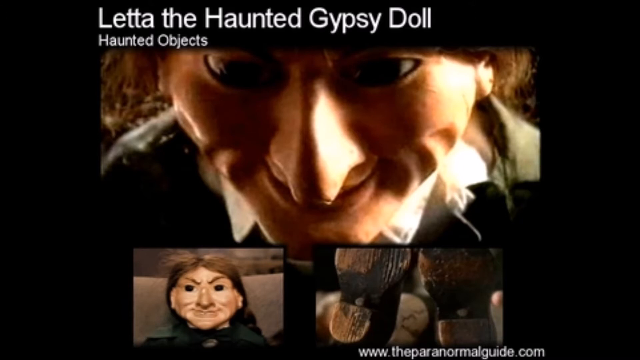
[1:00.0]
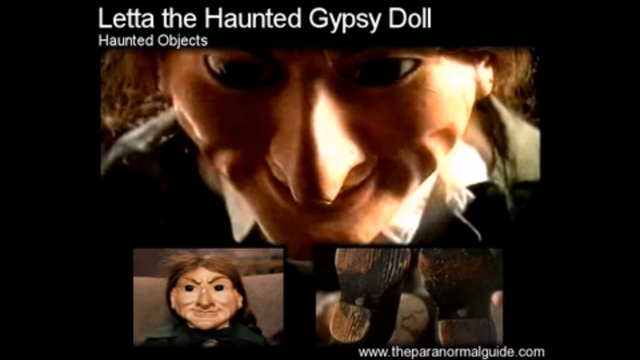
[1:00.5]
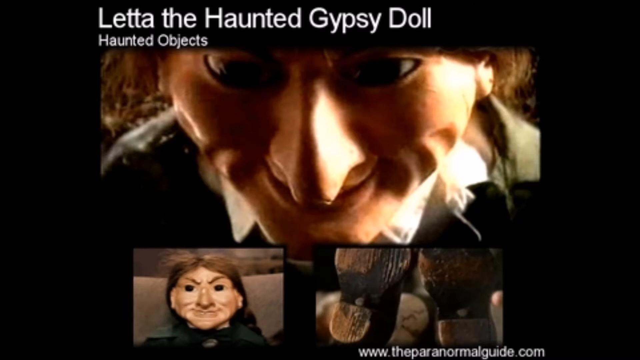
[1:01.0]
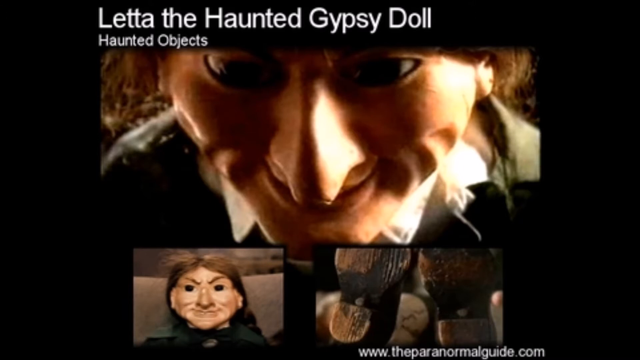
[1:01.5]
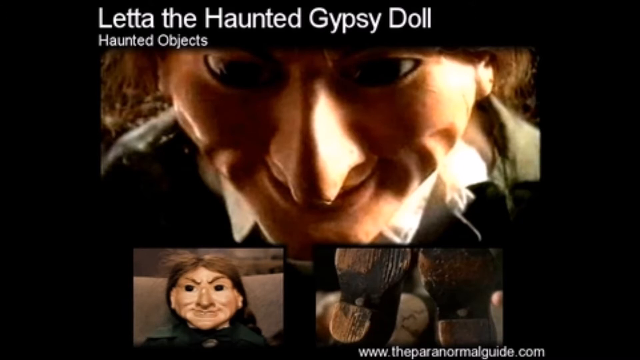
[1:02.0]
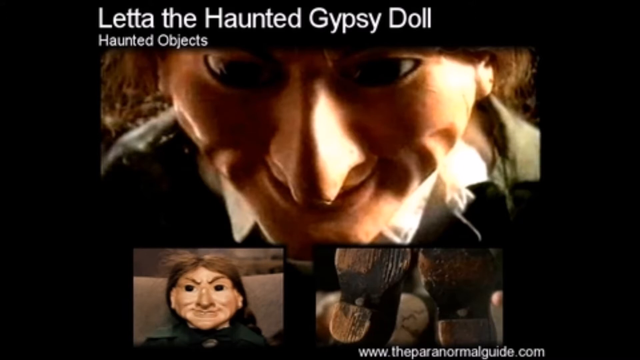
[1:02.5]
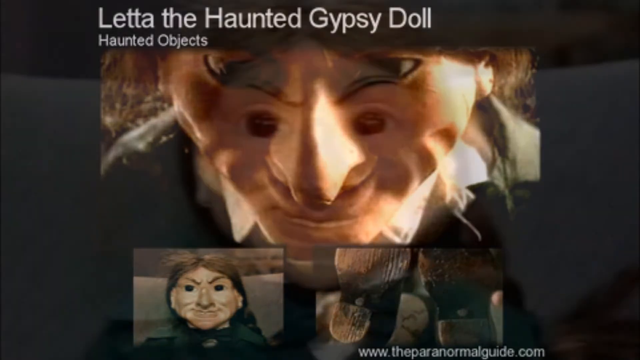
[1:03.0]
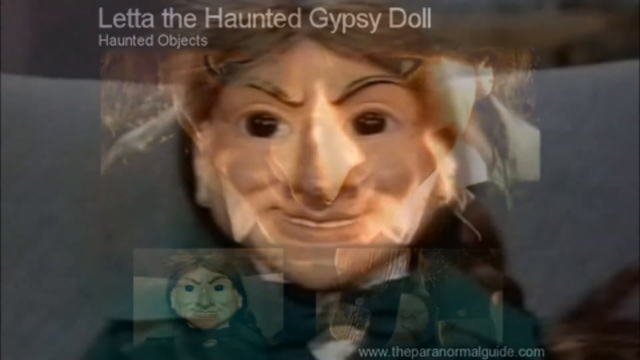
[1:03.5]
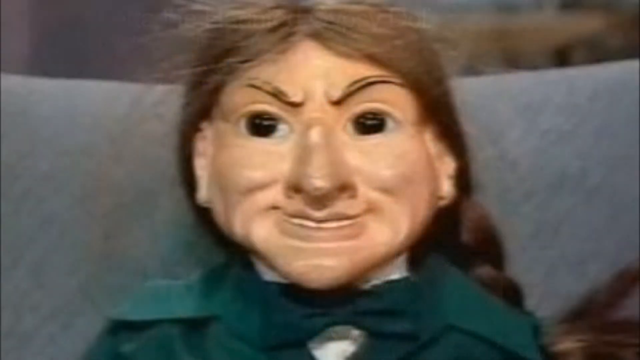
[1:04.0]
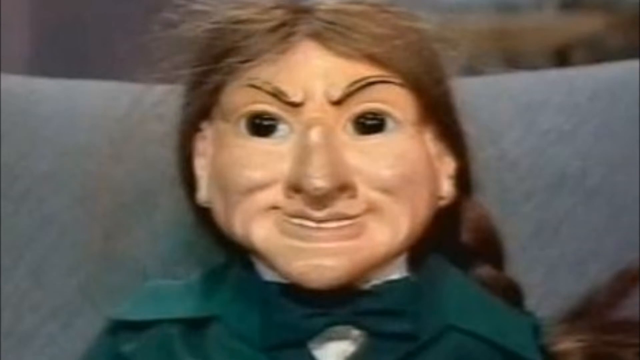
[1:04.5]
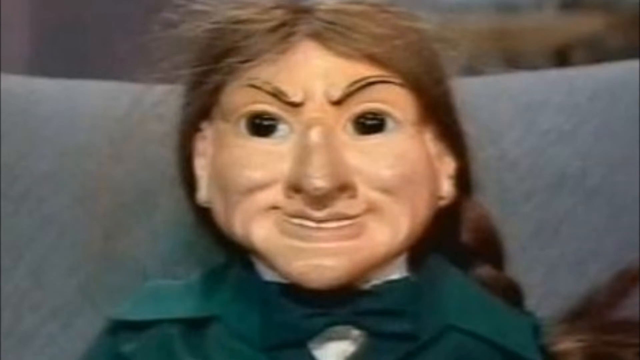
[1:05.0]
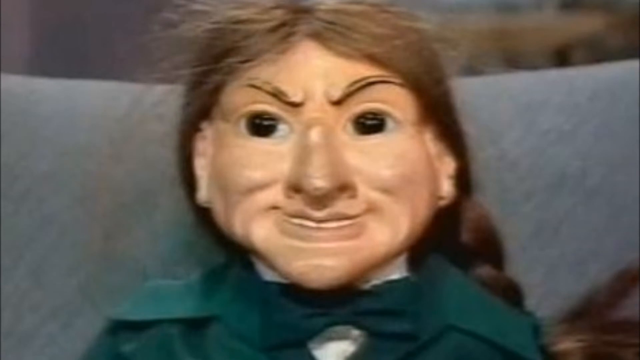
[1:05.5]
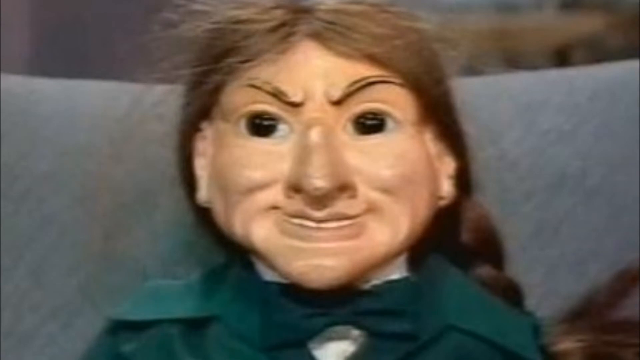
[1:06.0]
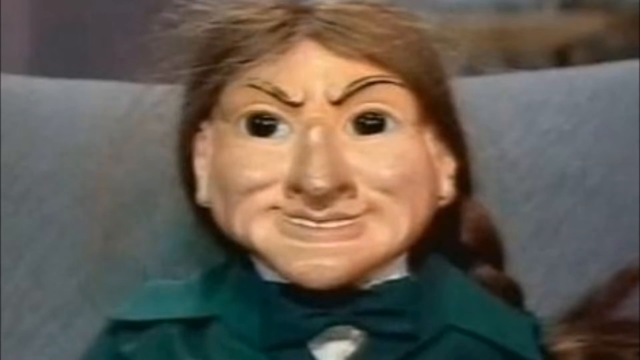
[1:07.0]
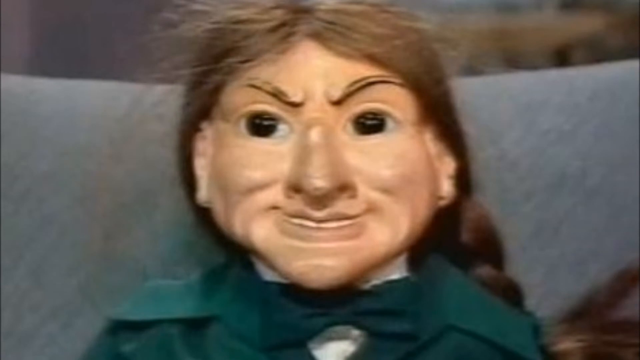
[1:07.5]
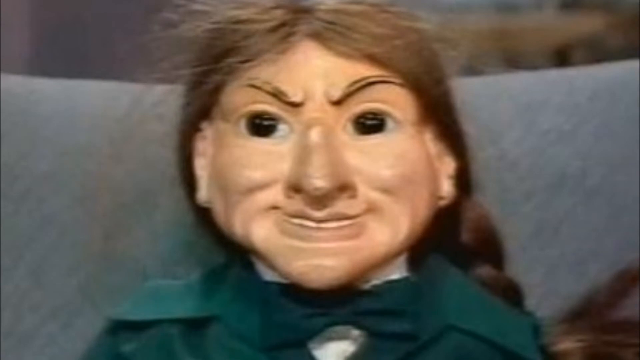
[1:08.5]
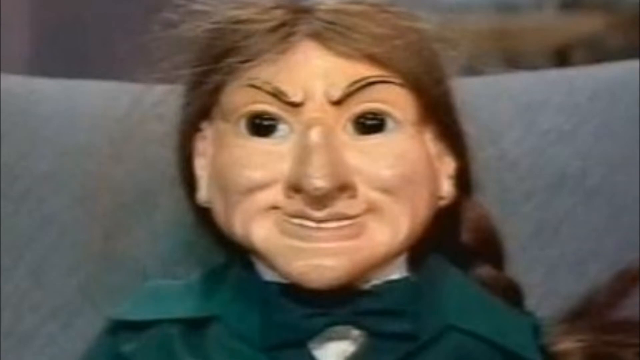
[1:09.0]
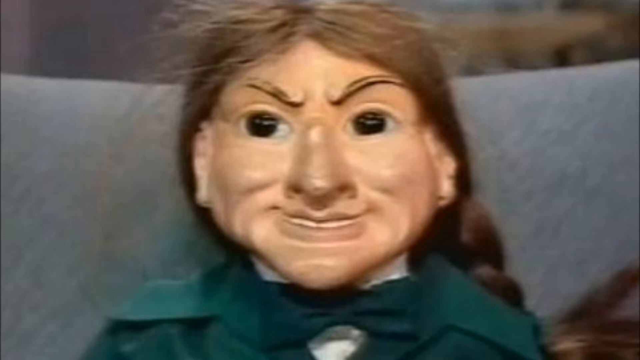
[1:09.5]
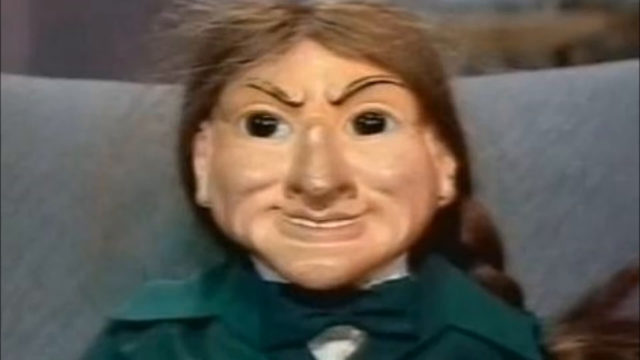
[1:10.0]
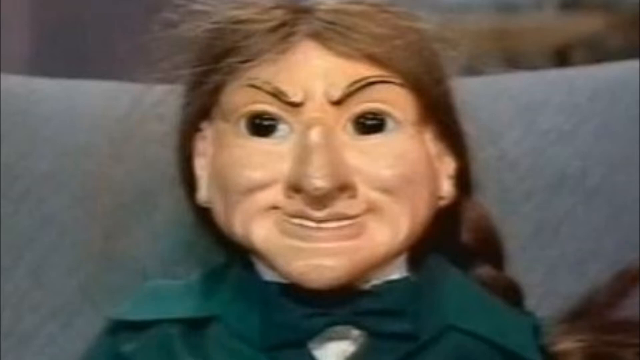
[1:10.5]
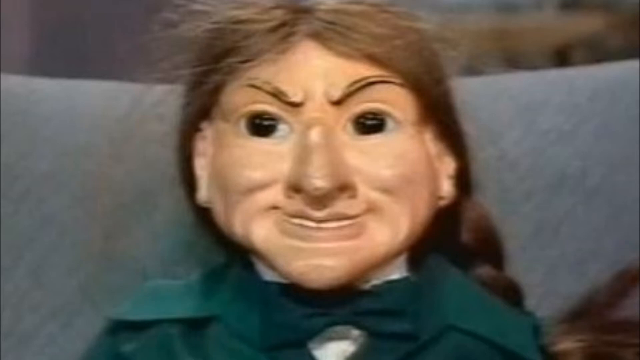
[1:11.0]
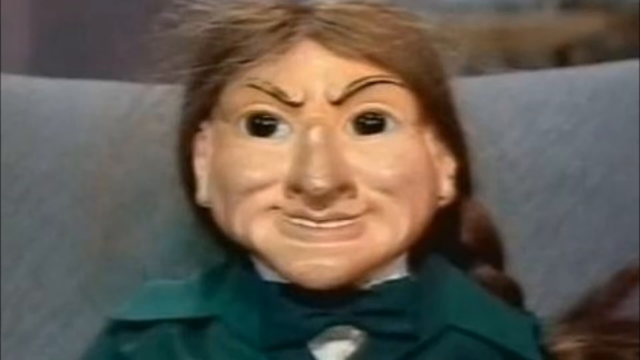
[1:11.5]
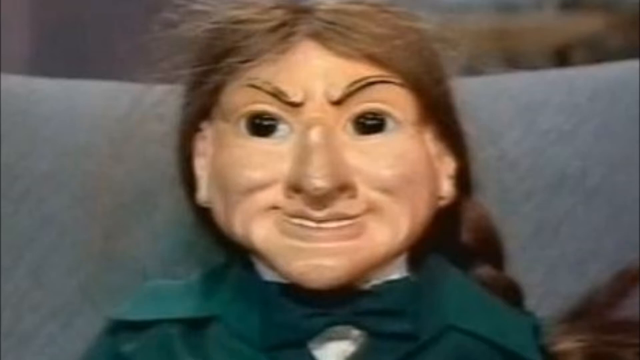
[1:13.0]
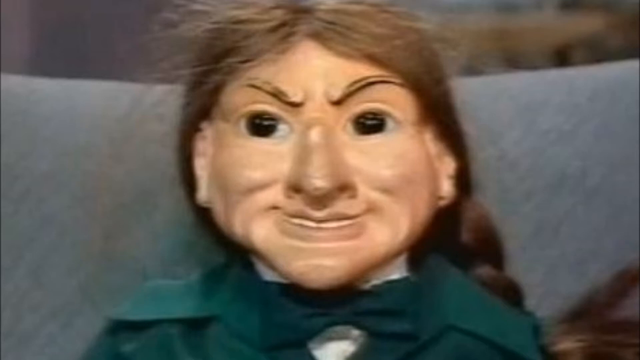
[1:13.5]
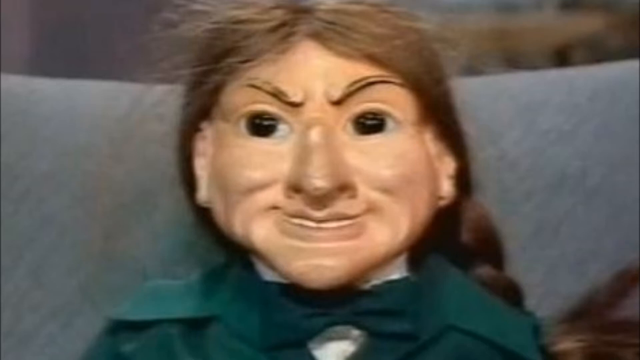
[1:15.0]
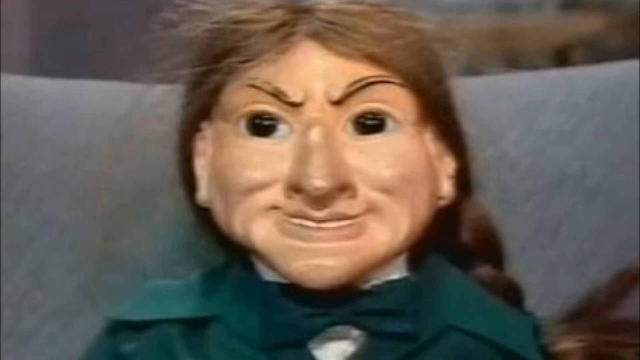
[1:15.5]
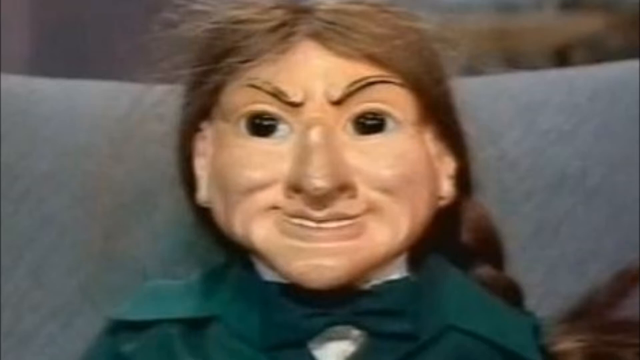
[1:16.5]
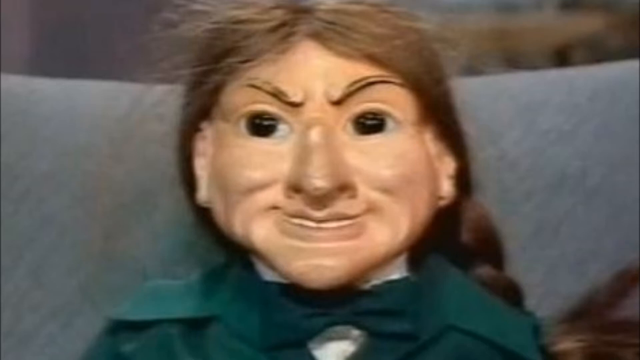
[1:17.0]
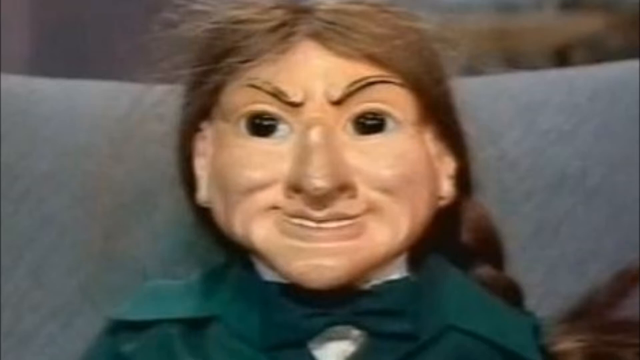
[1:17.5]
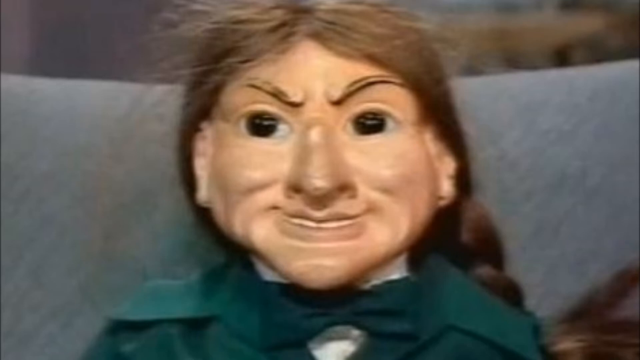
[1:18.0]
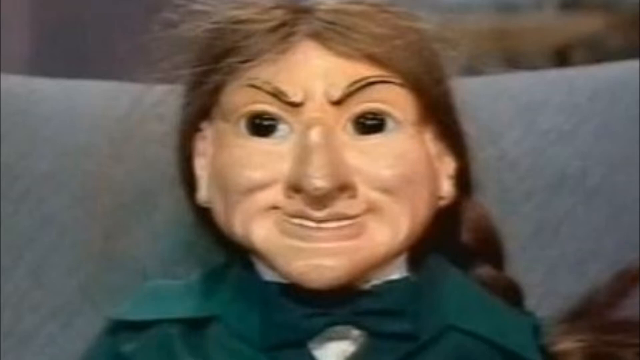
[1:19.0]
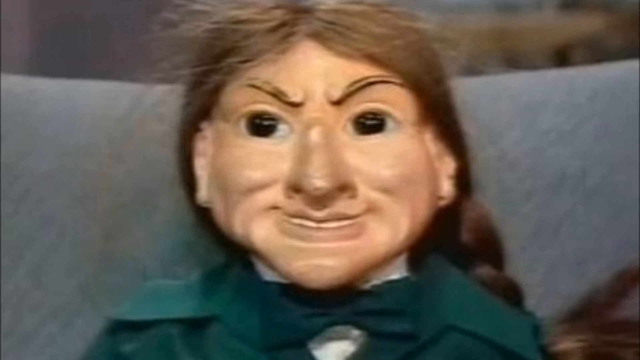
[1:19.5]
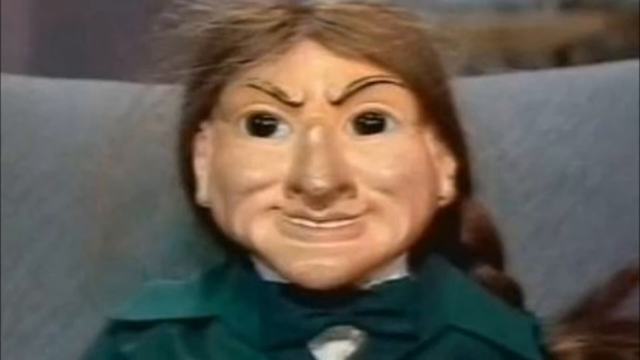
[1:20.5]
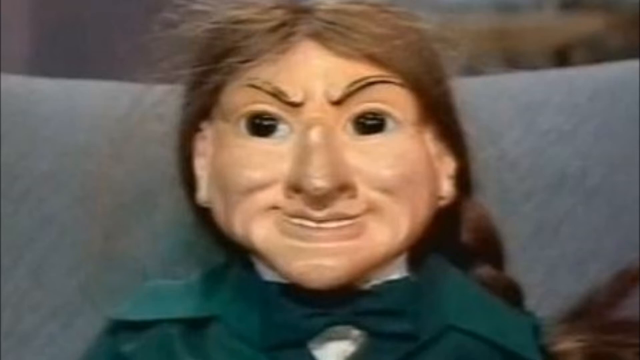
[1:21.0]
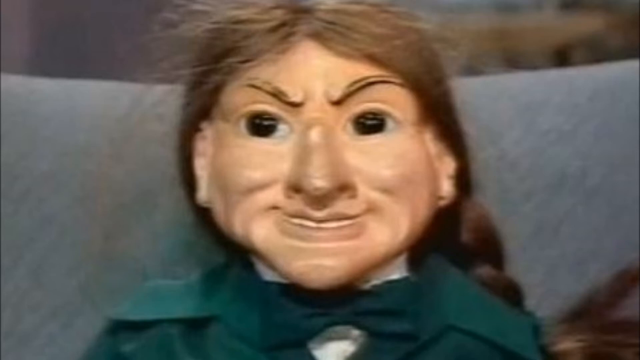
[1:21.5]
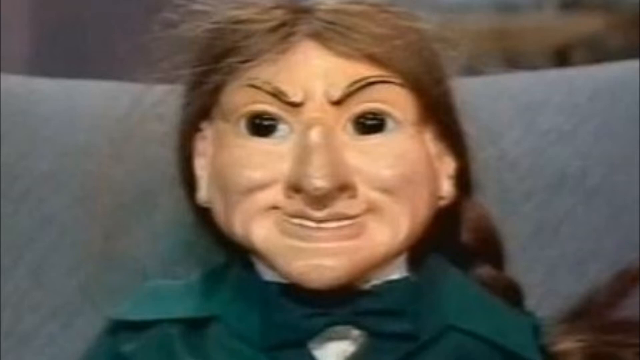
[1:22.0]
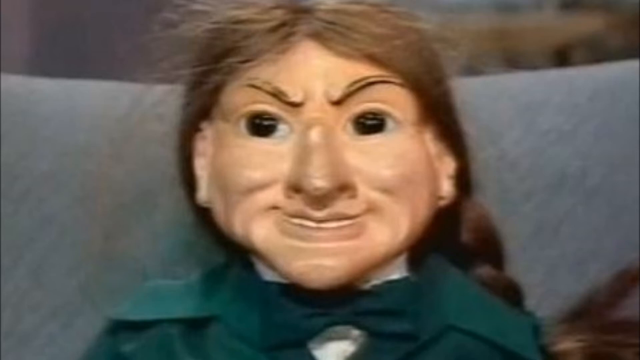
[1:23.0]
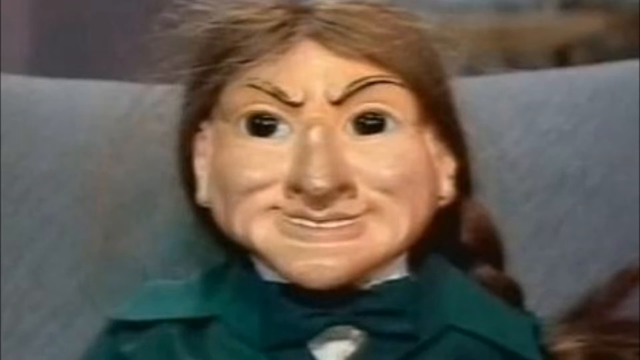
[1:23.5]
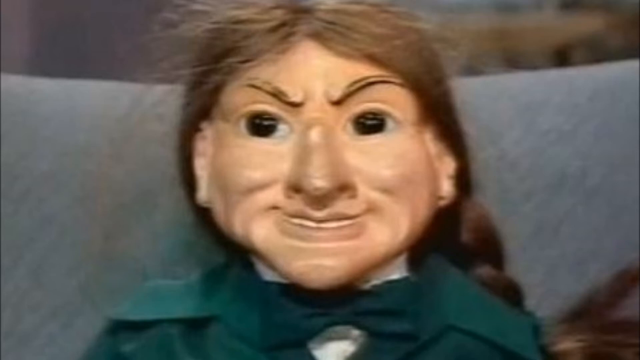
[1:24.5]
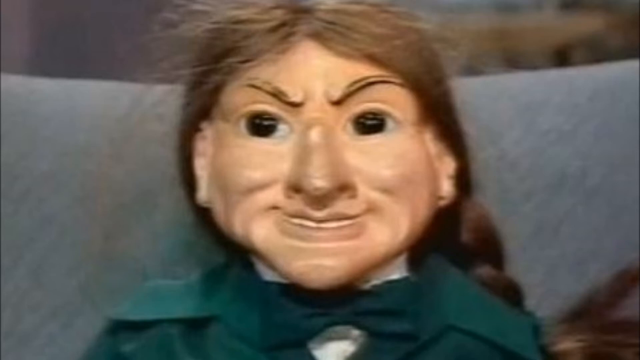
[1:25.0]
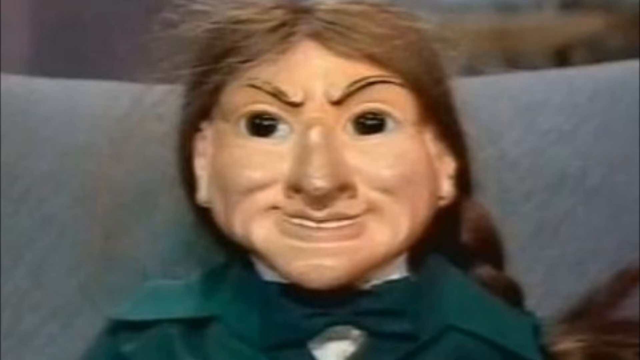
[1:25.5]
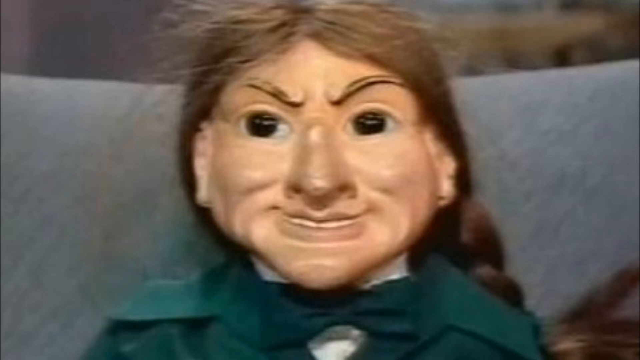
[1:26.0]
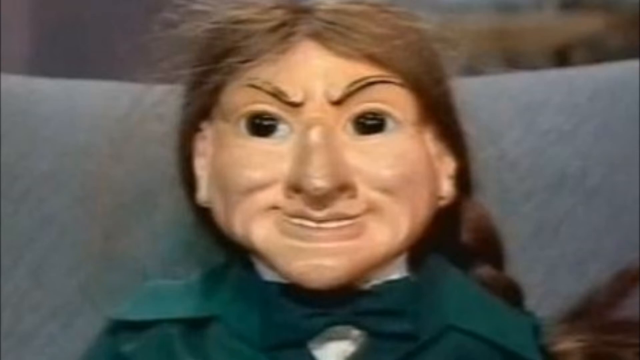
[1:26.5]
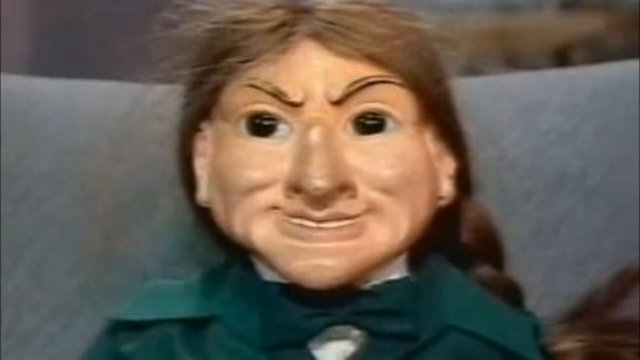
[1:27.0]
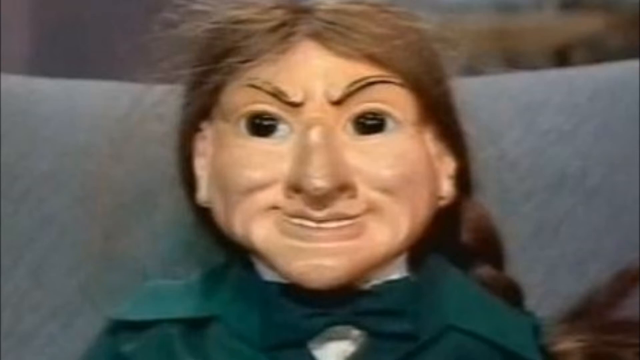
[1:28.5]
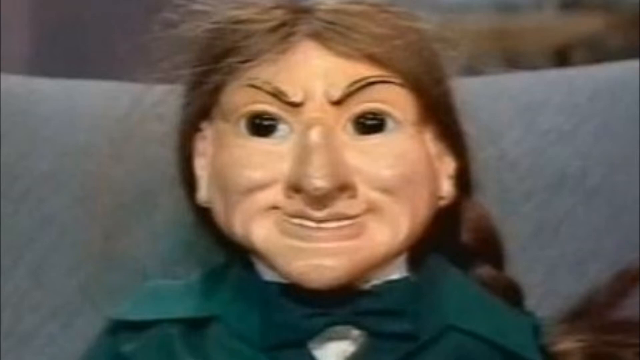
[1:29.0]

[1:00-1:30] The text "let the haunted gypsy doll haunted objects" is shown with a picture of the doll taken from above. Below are two other images: on the left, the doll with brown hair and really dark, big eyes, sitting on some kind of couch; on the right, a picture of shoes showing their bottoms. The bottom-left image is then shown briefly: the doll's hair is really long and goes into a ponytail behind it, it has angry eyebrows, it wears some kind of olive green t-shirt, and there is some white at its neck.